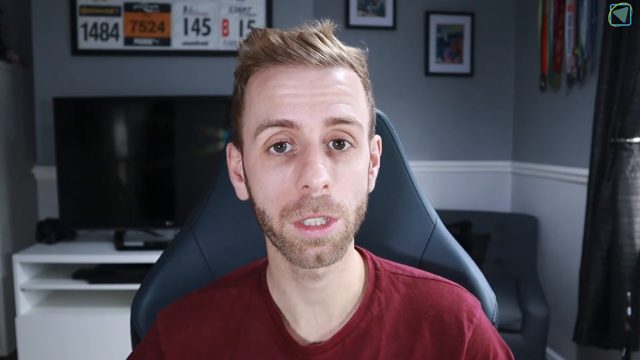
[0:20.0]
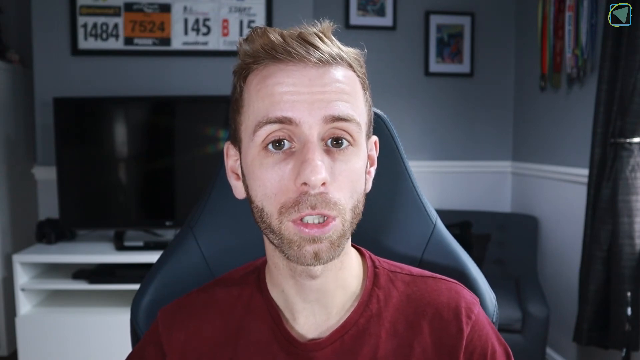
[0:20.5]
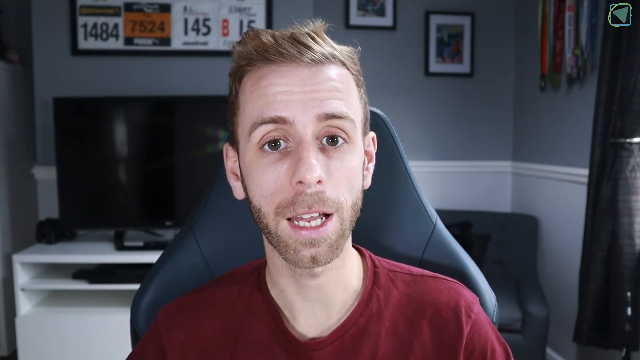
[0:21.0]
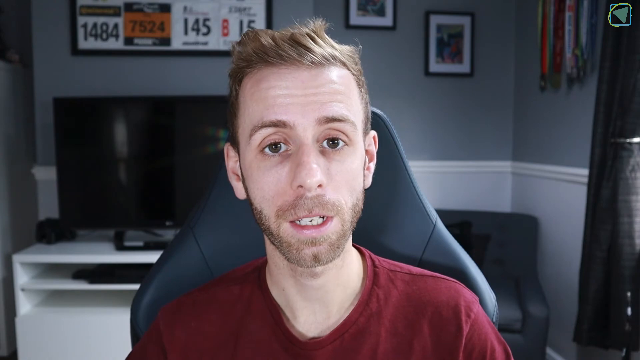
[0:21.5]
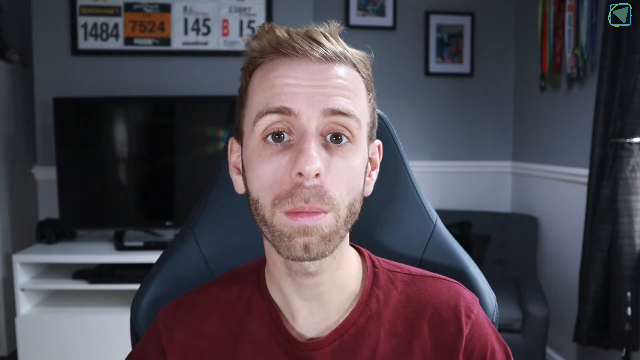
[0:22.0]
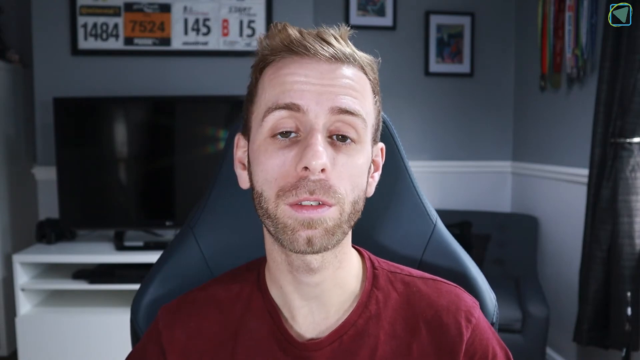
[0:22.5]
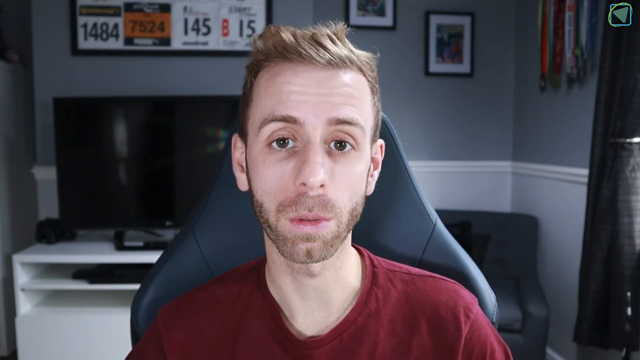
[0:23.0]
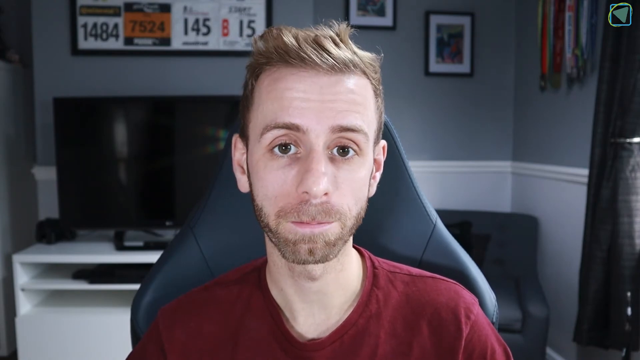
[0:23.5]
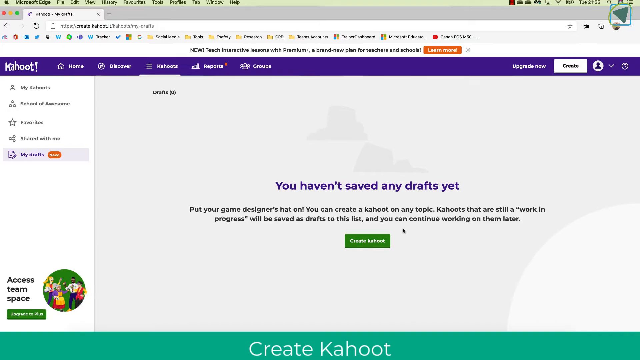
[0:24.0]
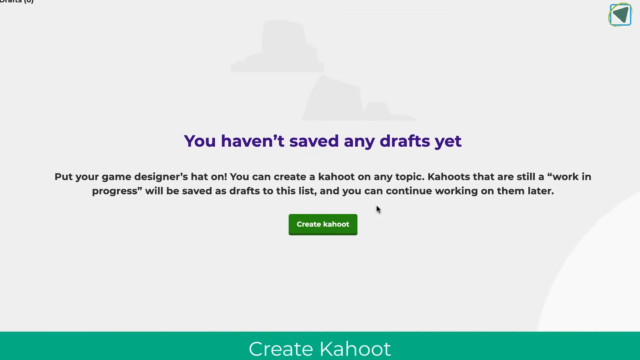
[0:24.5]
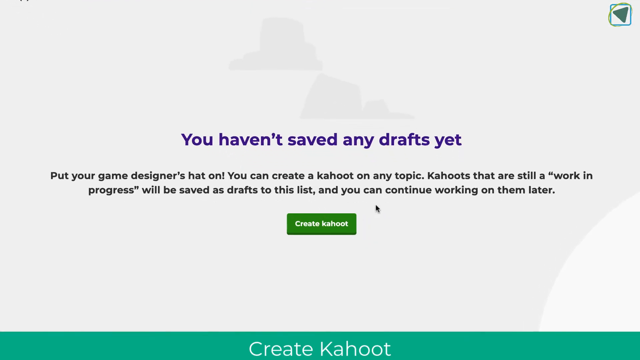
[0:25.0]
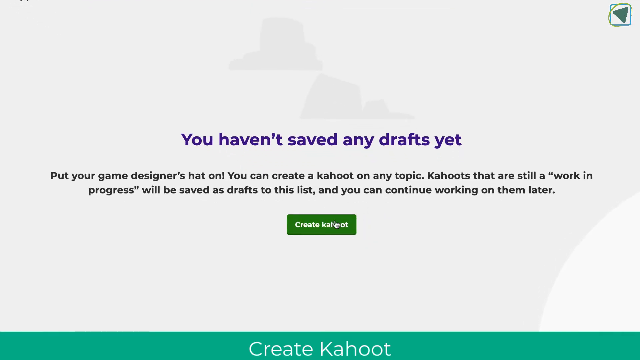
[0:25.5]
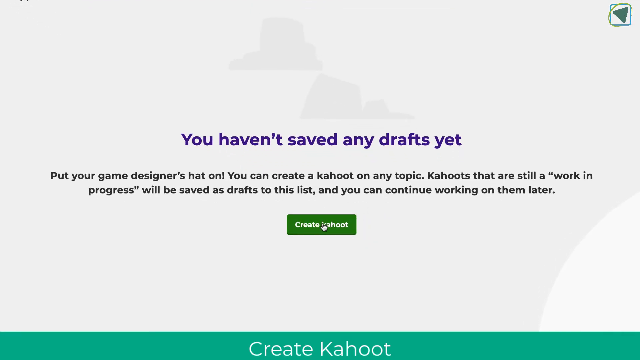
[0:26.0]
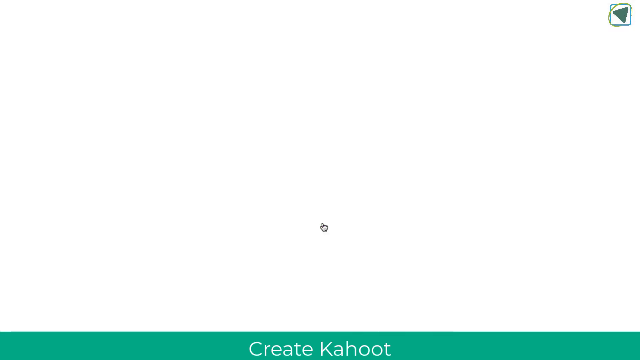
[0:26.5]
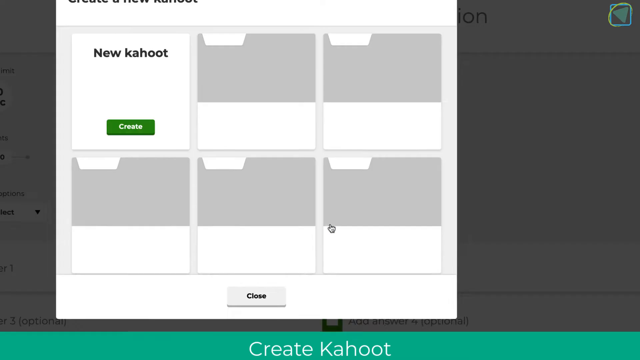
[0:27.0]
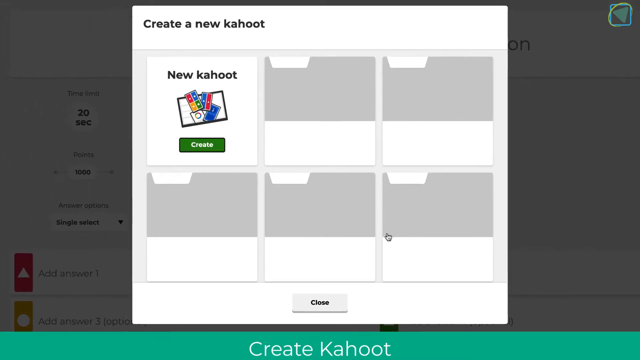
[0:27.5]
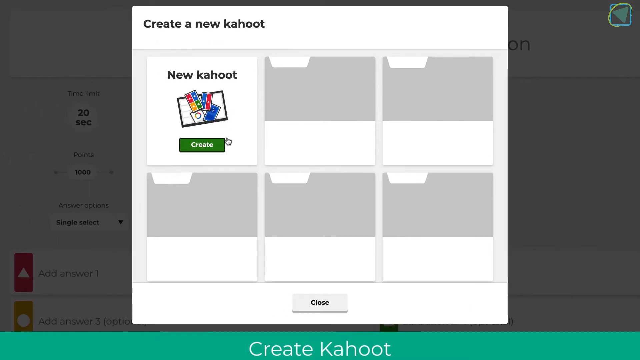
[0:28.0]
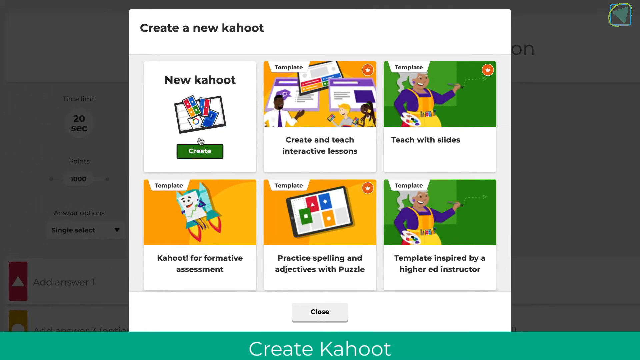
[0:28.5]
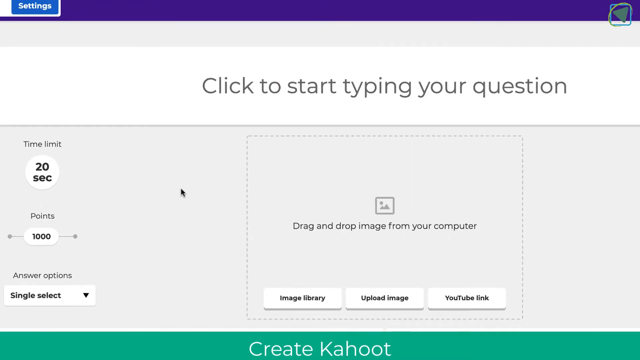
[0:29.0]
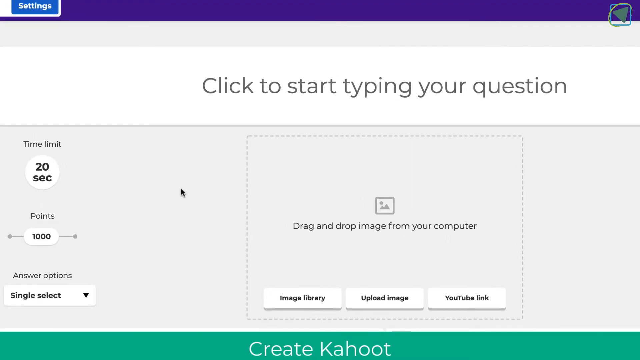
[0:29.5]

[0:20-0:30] Another shot shows Phil talking to the camera in the same room with the awards, medals and number cards. The walls have a split-in-half design, white on the bottom and blue on top. After a few seconds of Phil talking, the video switches to a screen grab of his web browser showing Kahoot. It has a prominent purple horizontal line at the top with the Kahoot logo and a number of options and menus, a white column on the left side, and an open gray space that says nothing is saved yet. The camera zooms in on that area. There is a green button that says "create Kahoot", with the black cursor right next to it. The cursor moves over and clicks the button, opening a menu for creating a new Kahoot. He has none created yet, and he clicks to make a new one. A quick shot follows of another menu that says "click to start typing your question".